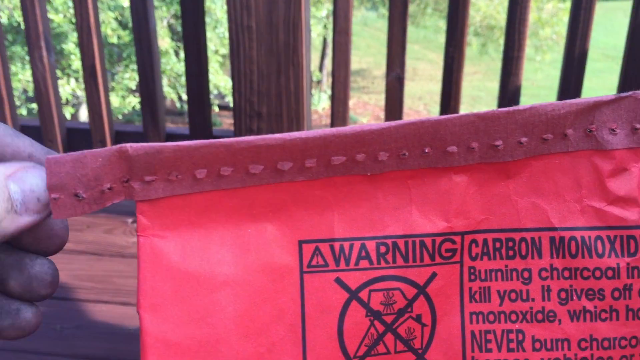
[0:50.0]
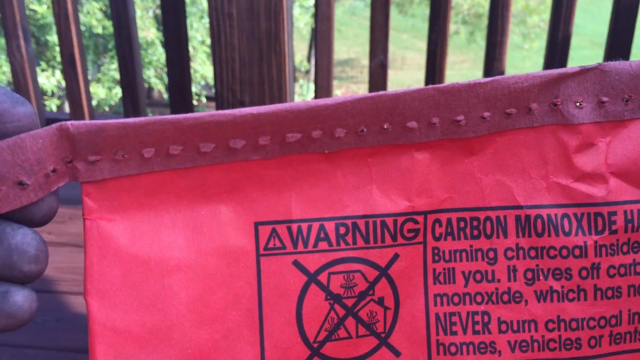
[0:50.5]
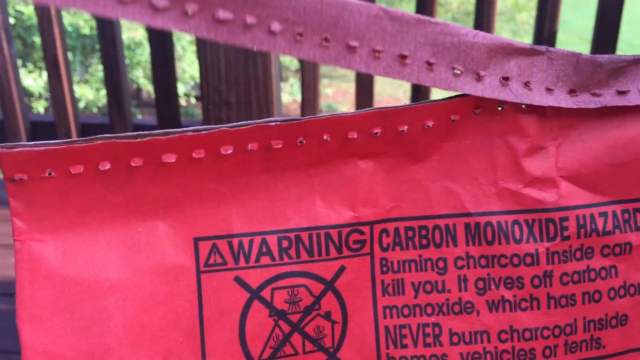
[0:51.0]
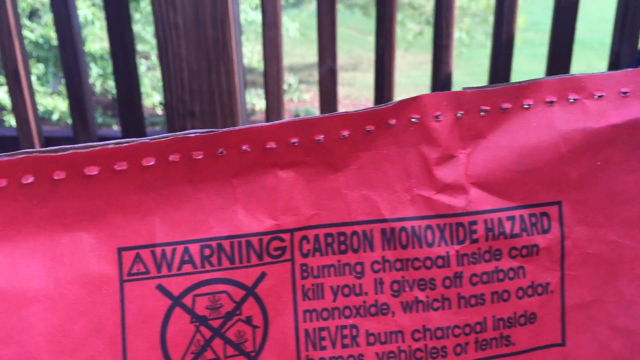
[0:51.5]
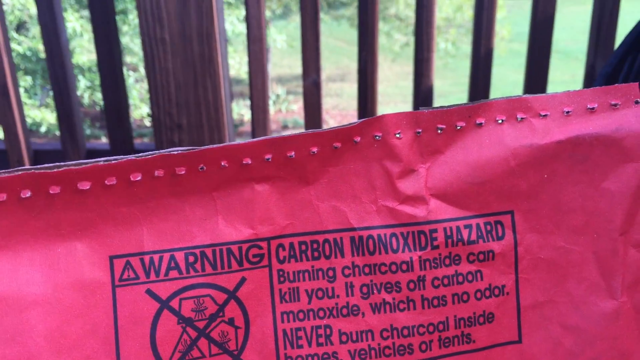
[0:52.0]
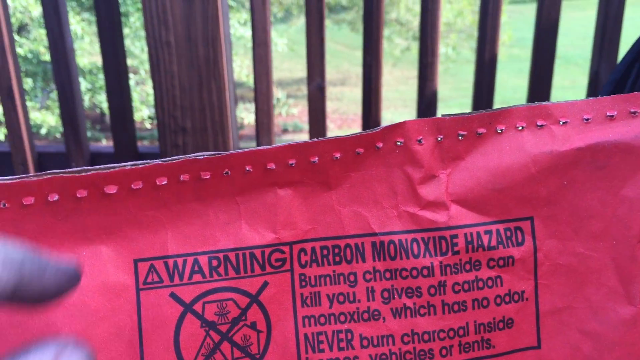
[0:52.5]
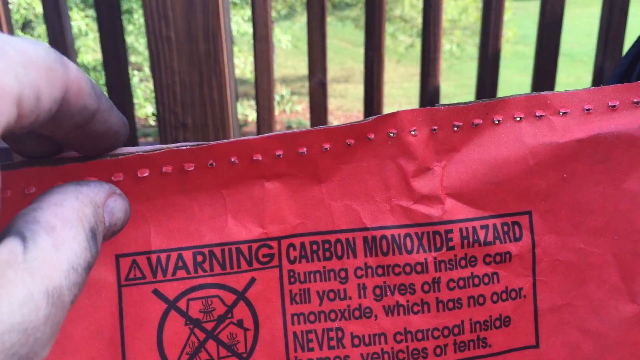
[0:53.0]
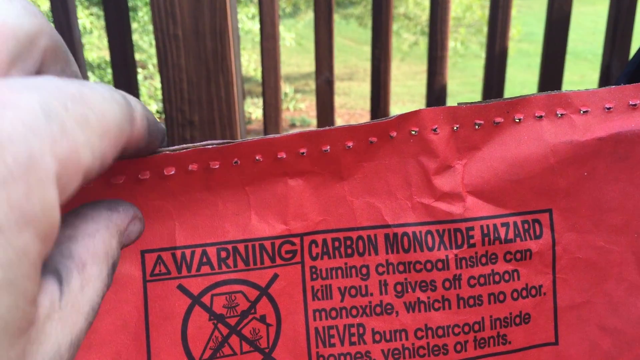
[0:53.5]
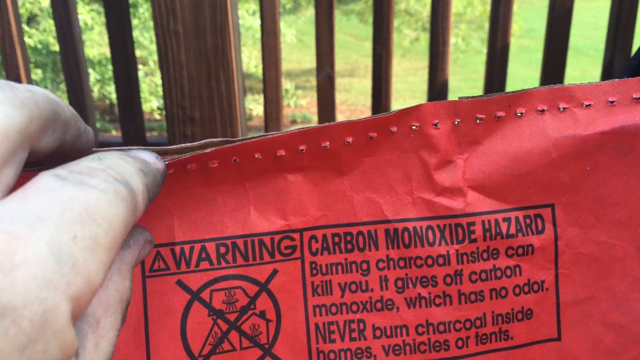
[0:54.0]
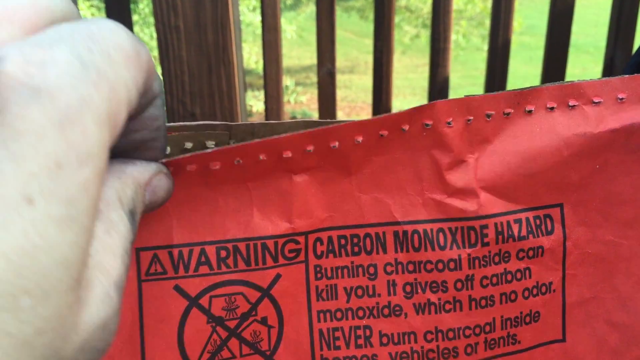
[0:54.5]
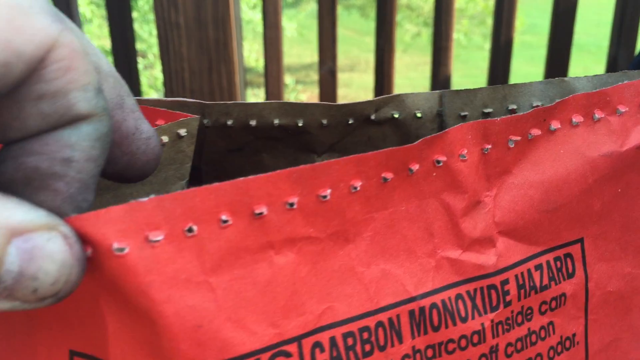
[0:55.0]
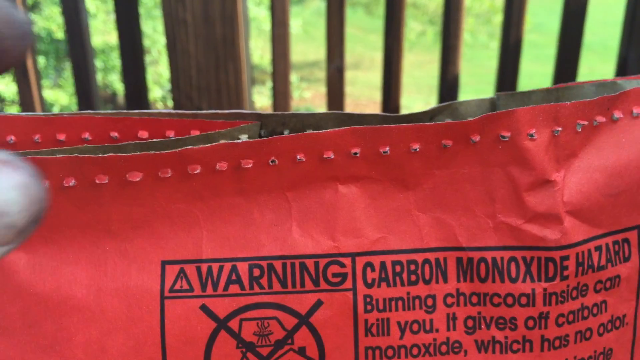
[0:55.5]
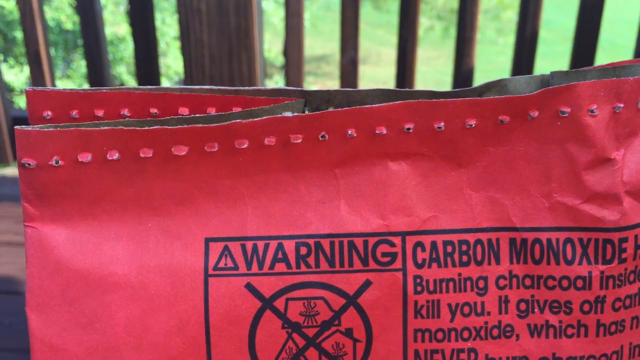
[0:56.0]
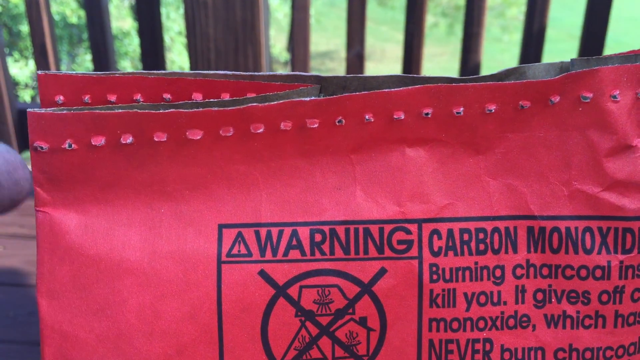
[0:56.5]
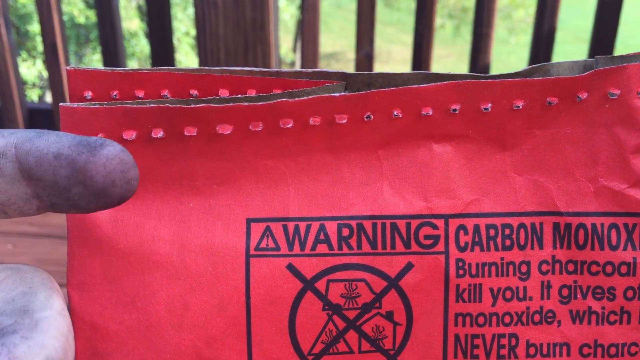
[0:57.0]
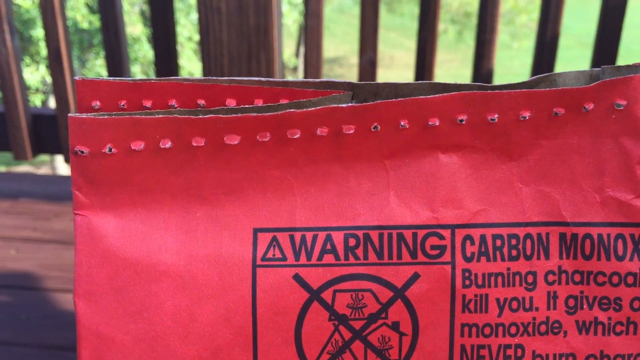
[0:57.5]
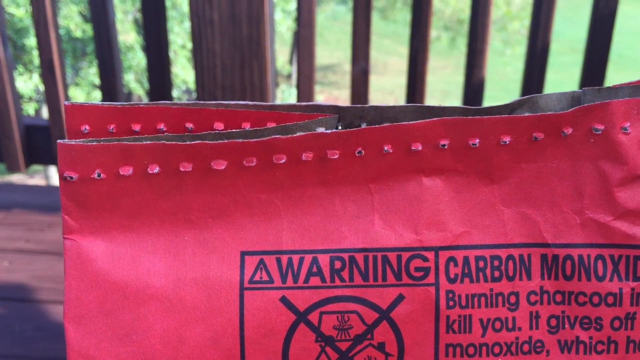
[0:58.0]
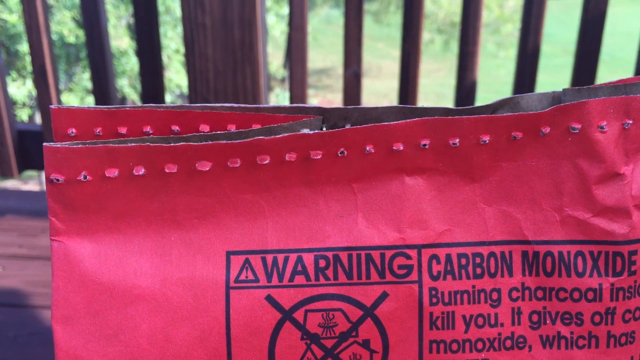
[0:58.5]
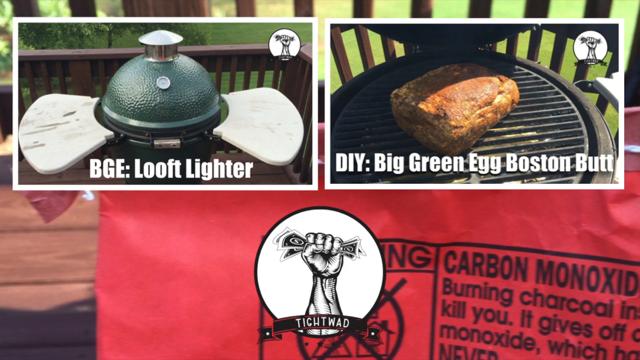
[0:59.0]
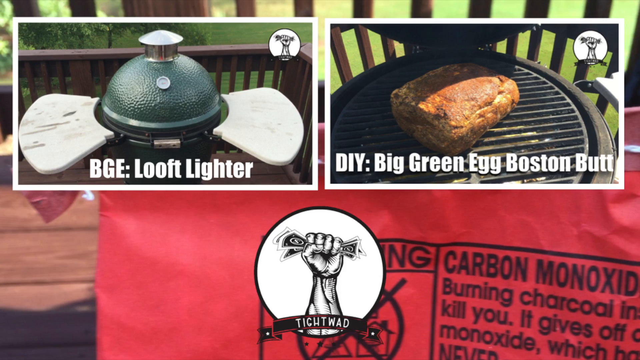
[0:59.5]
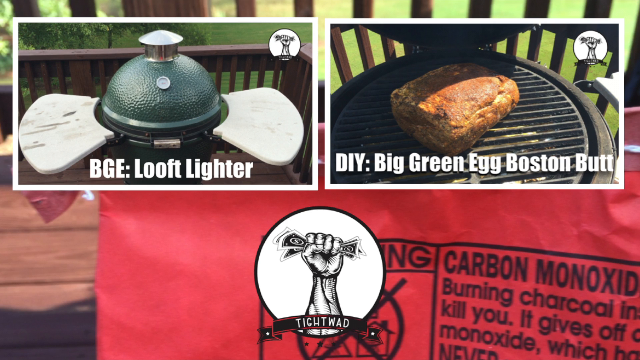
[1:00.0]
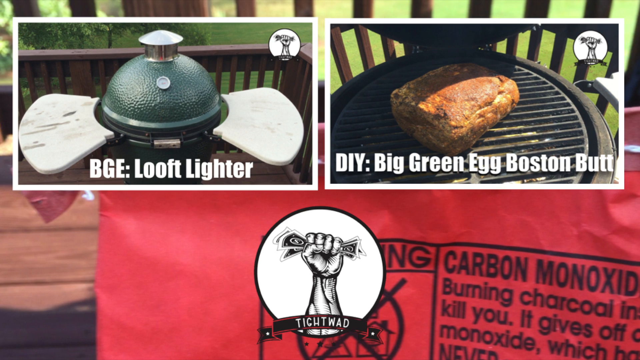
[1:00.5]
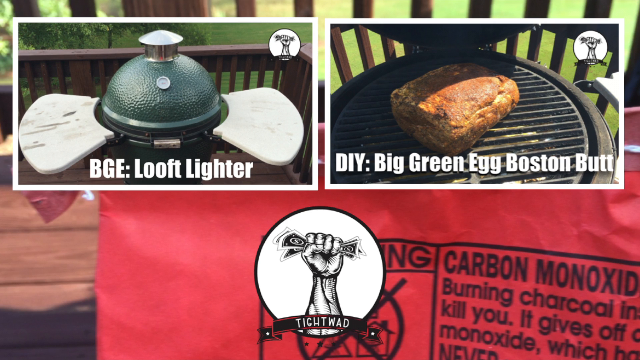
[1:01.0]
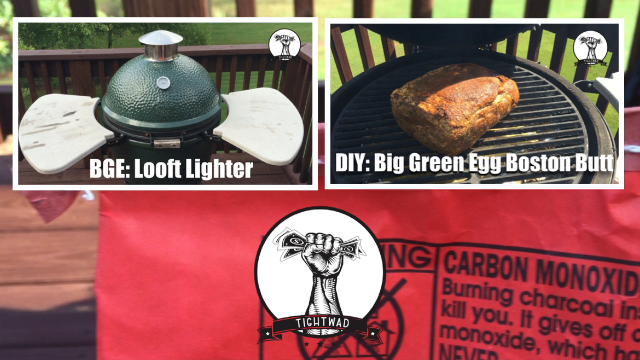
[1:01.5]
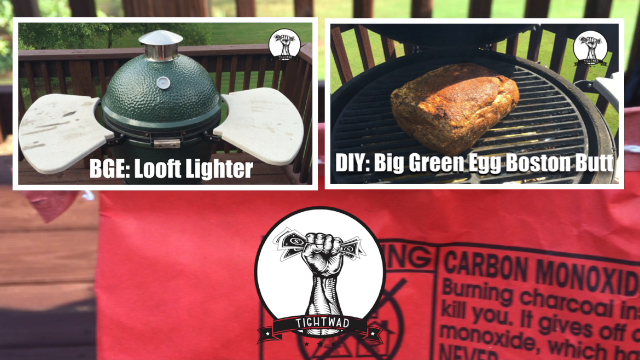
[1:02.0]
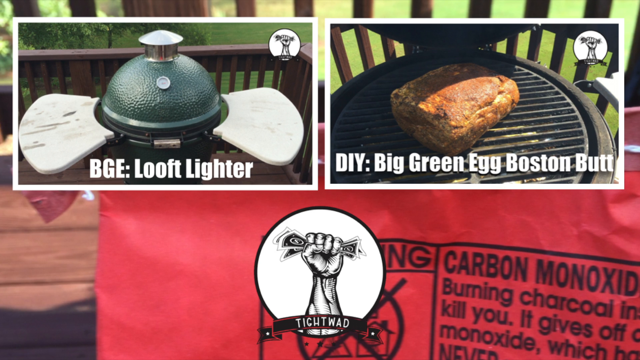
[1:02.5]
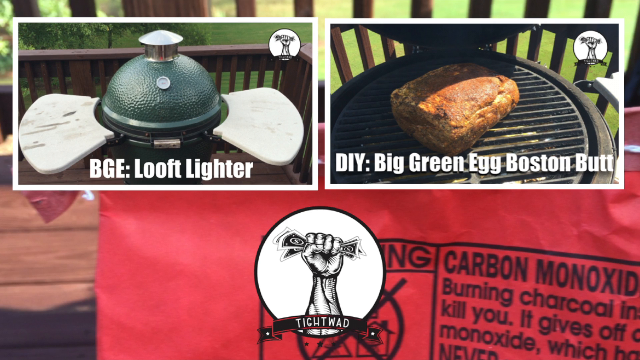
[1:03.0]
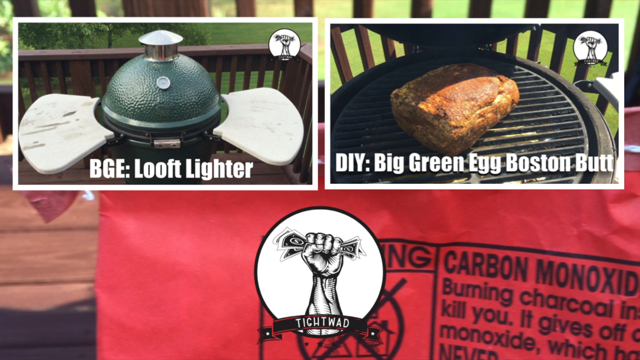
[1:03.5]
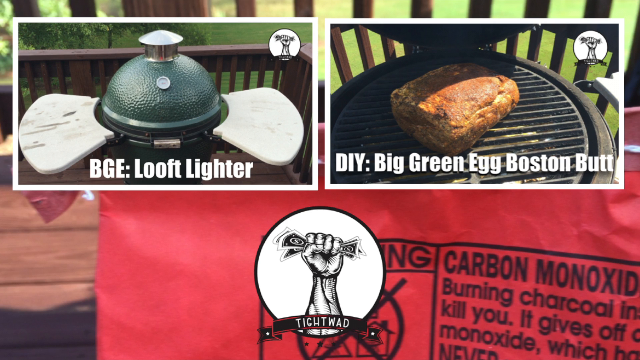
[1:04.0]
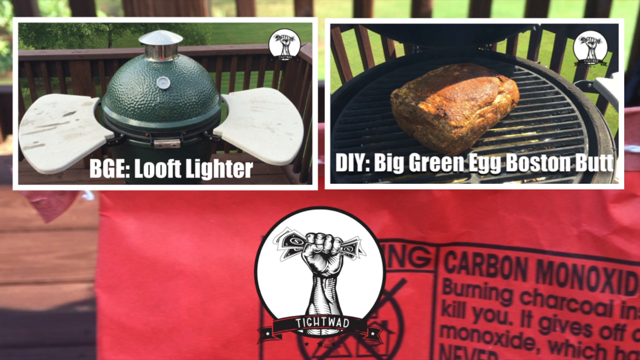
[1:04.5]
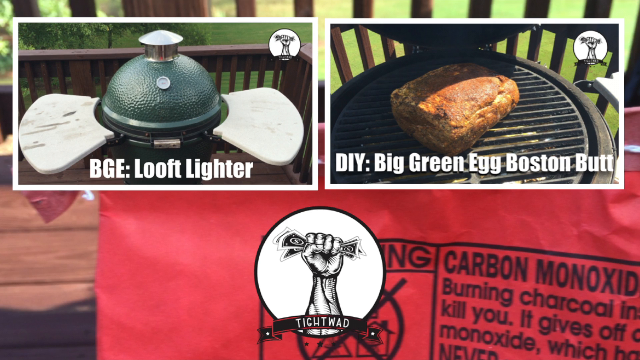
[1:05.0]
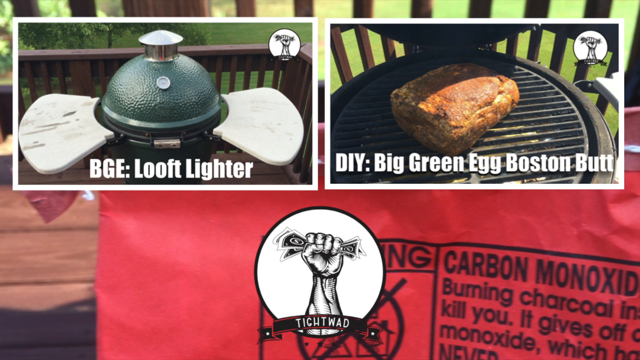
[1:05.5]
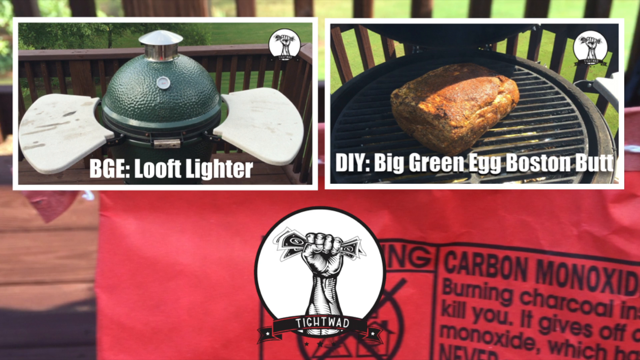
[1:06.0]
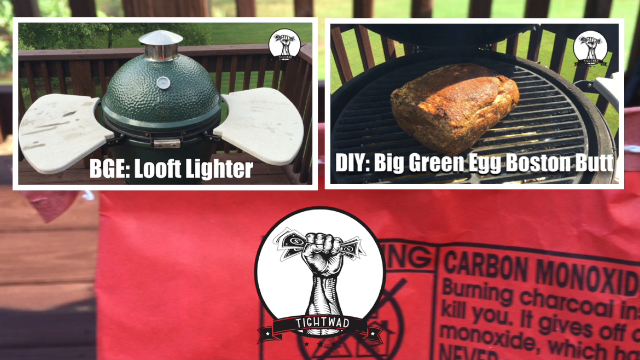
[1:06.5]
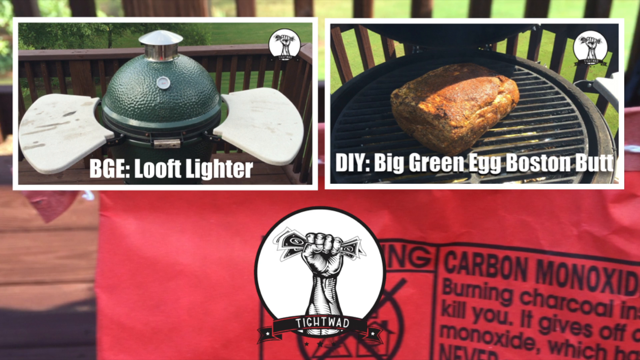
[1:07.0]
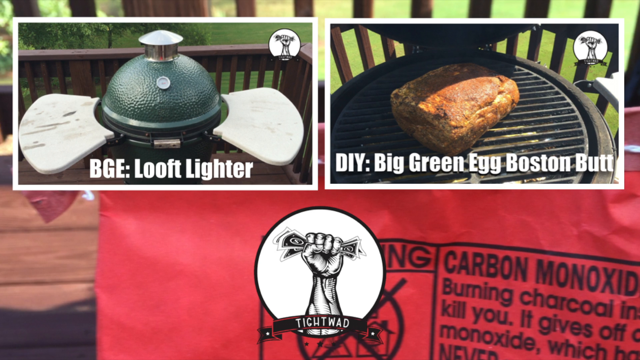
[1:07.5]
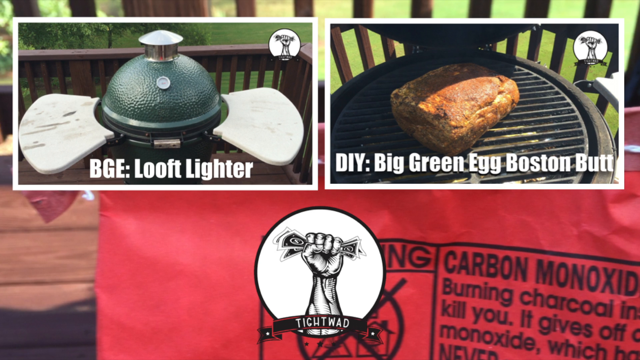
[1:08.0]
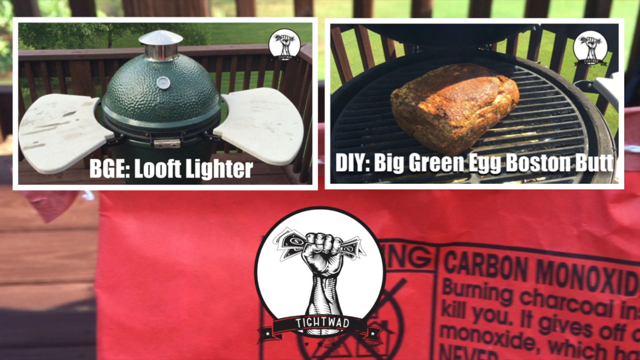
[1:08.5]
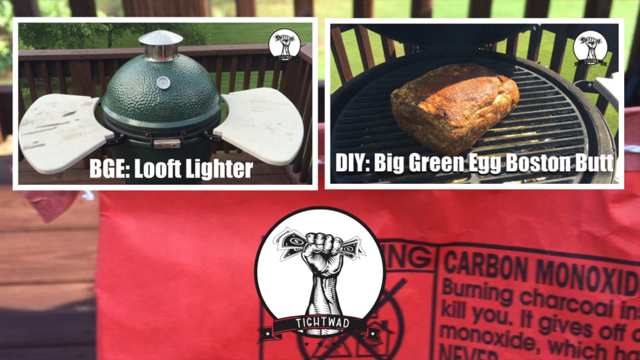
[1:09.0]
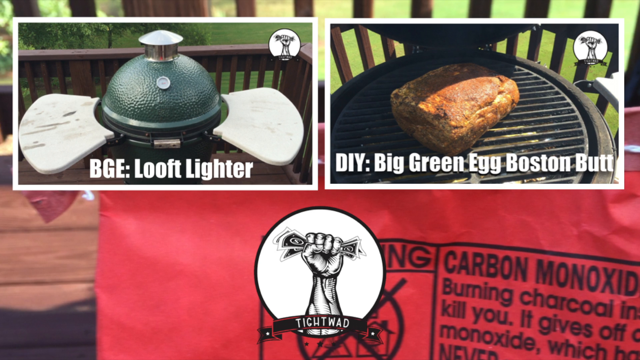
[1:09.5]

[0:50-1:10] The bag is opened. On the back there is a written warning saying the material is highly flammable; it also mentions carbon monoxide and says "burning charcoal inside can kill you." The person who opened the bag is sitting in the chair.